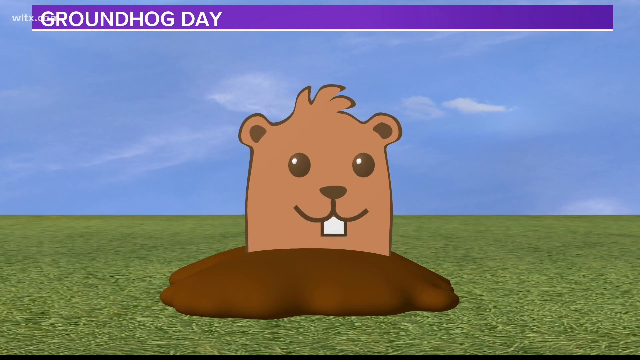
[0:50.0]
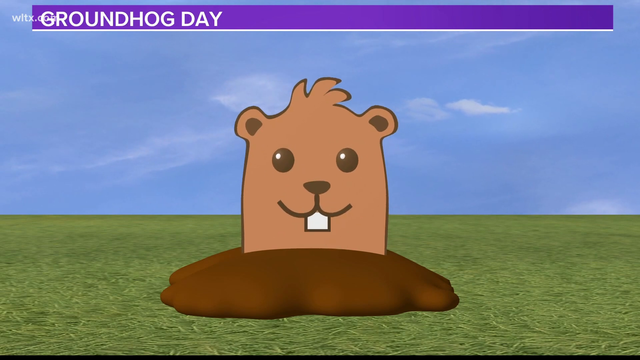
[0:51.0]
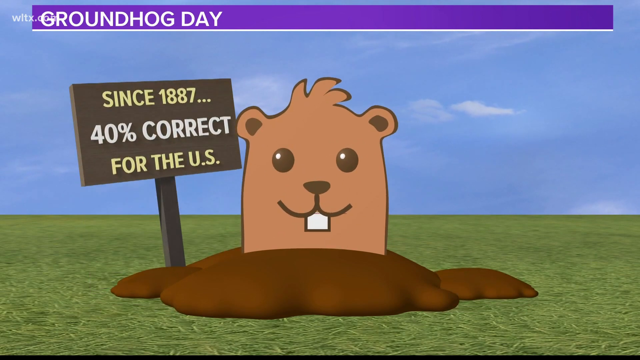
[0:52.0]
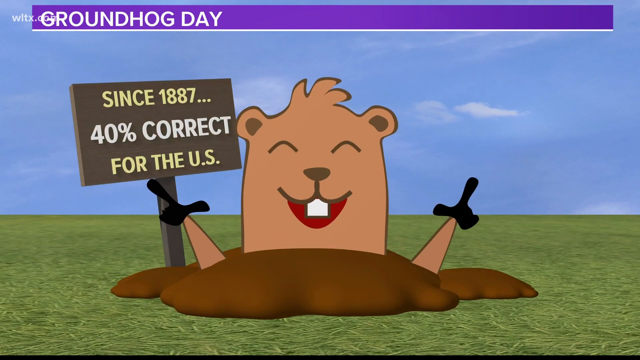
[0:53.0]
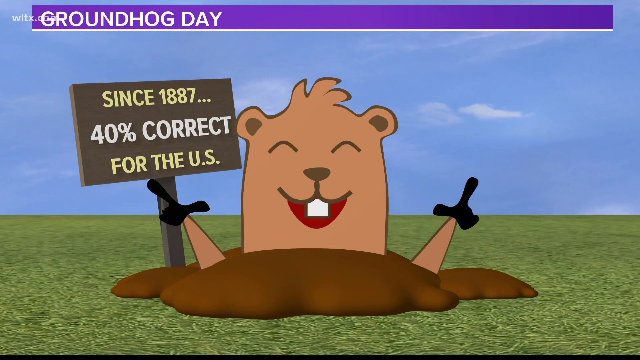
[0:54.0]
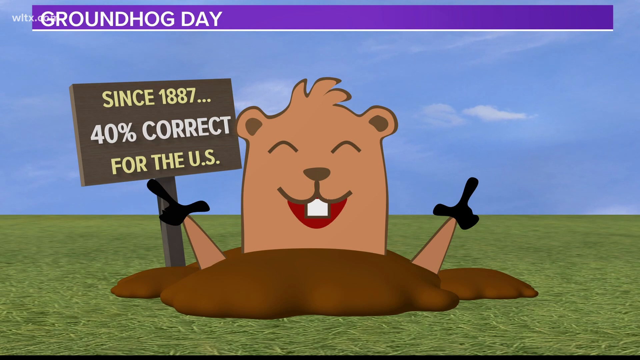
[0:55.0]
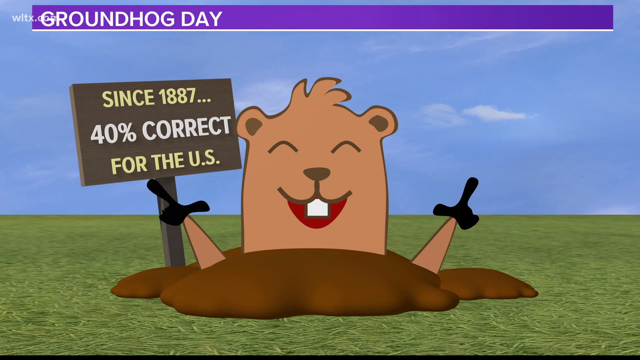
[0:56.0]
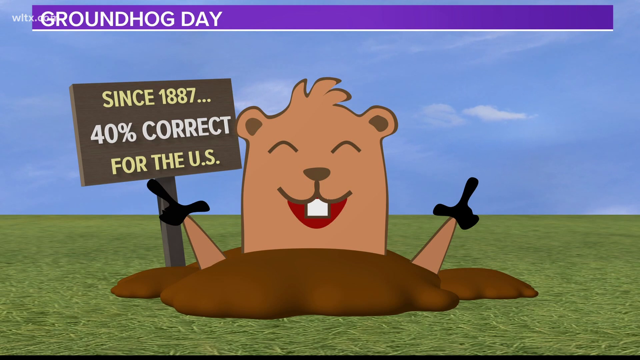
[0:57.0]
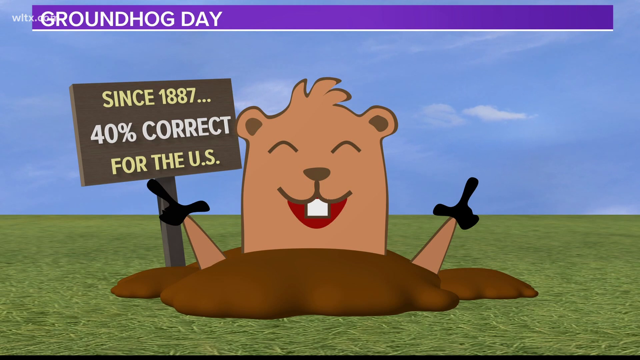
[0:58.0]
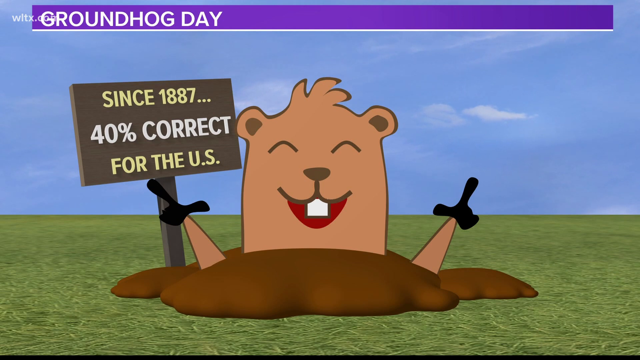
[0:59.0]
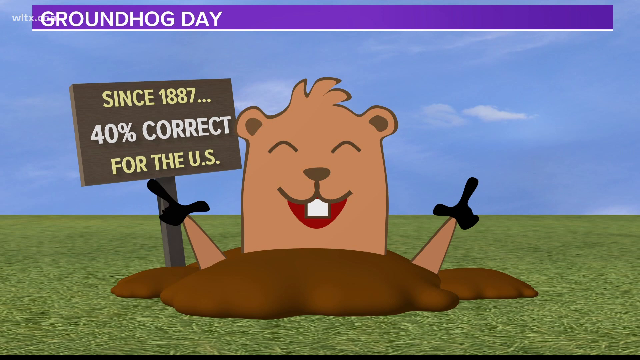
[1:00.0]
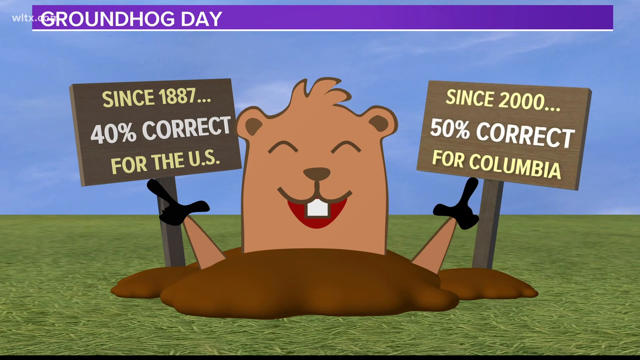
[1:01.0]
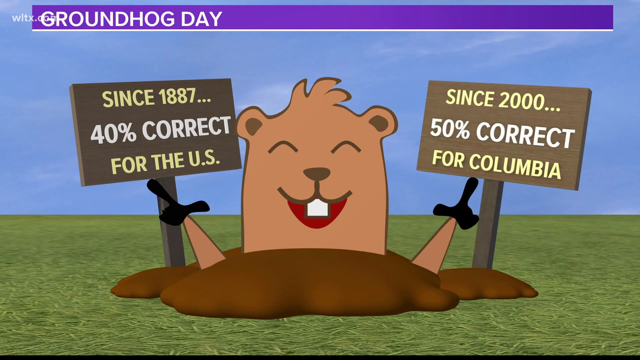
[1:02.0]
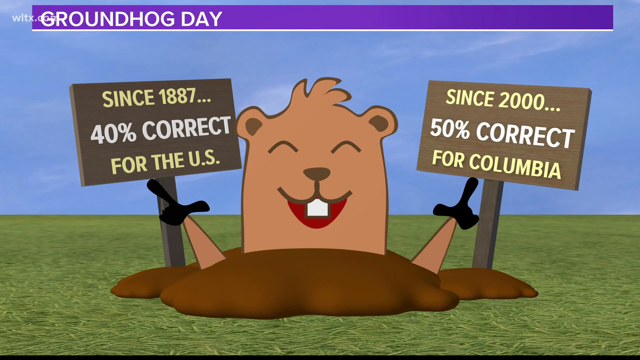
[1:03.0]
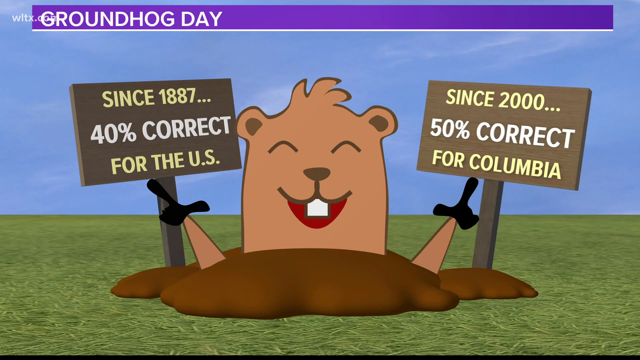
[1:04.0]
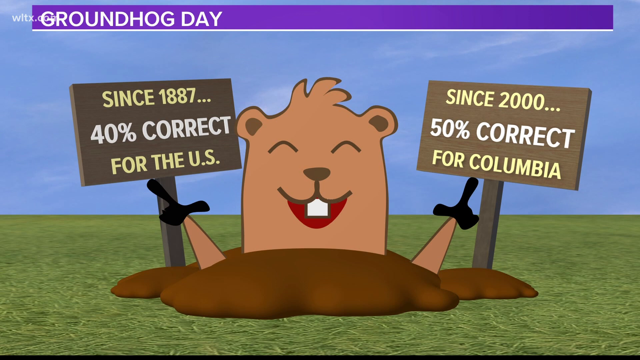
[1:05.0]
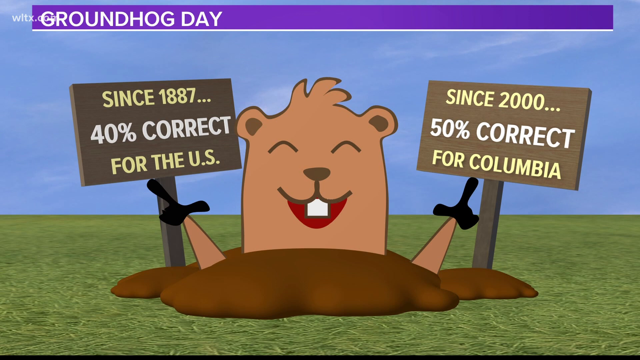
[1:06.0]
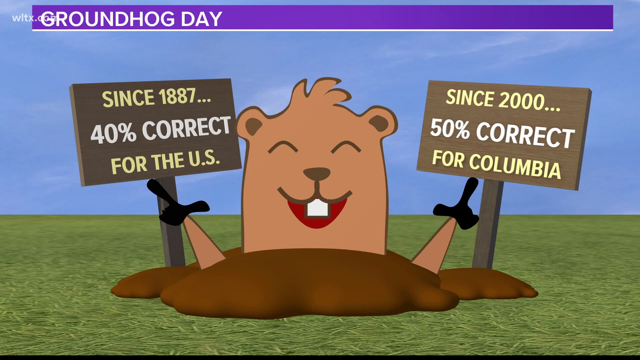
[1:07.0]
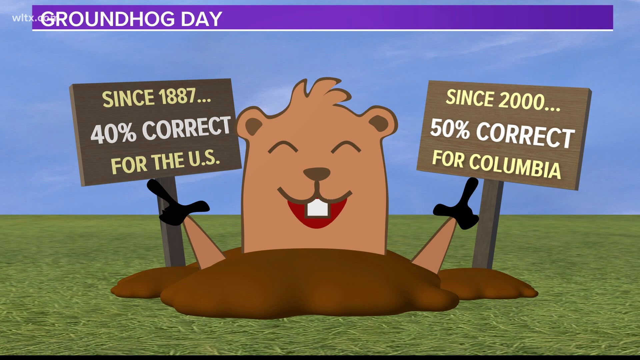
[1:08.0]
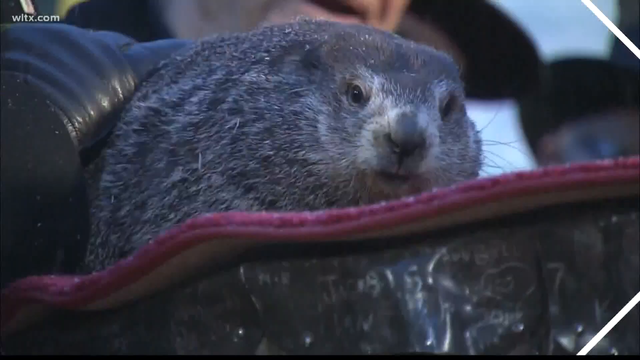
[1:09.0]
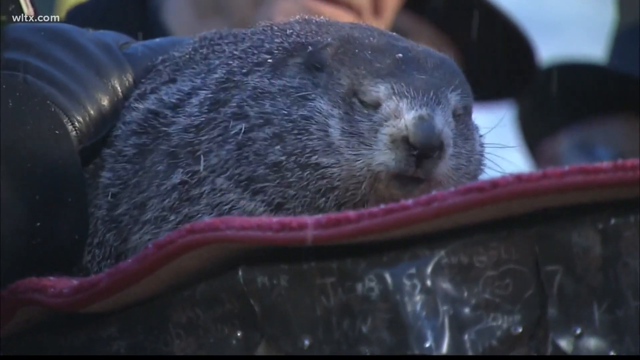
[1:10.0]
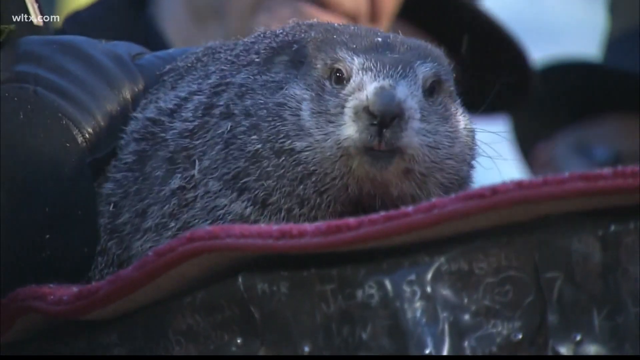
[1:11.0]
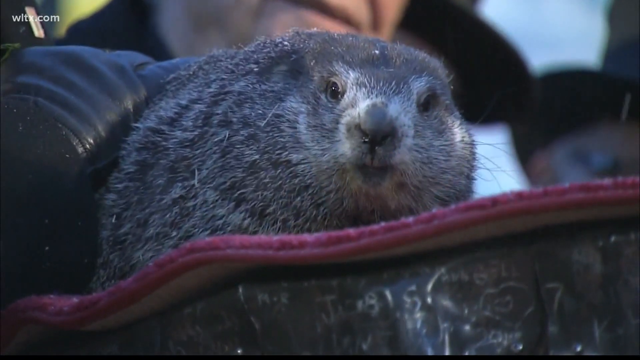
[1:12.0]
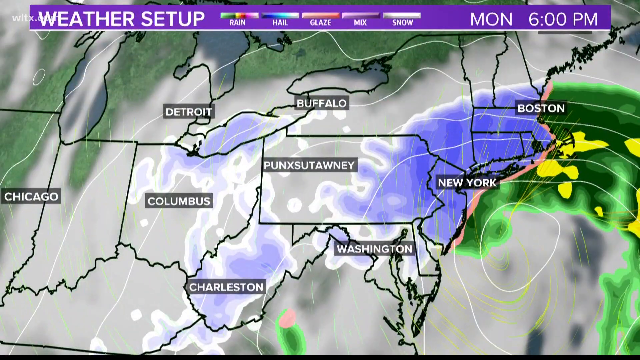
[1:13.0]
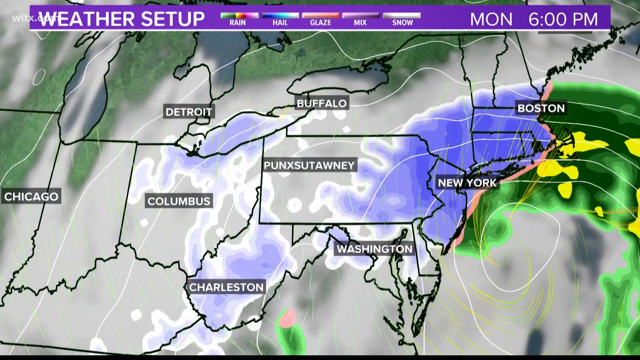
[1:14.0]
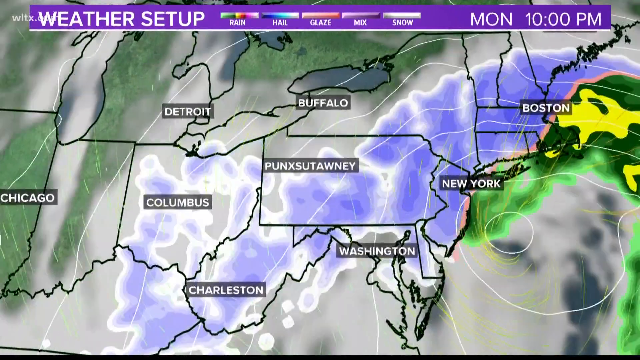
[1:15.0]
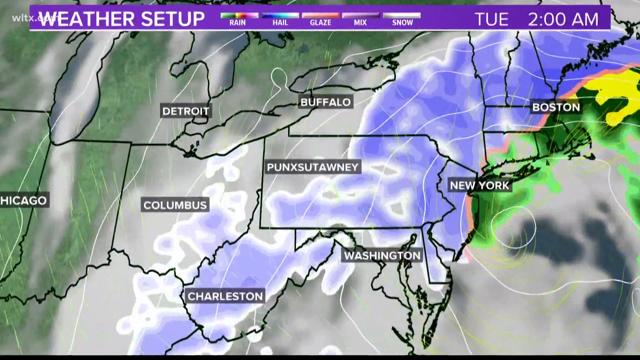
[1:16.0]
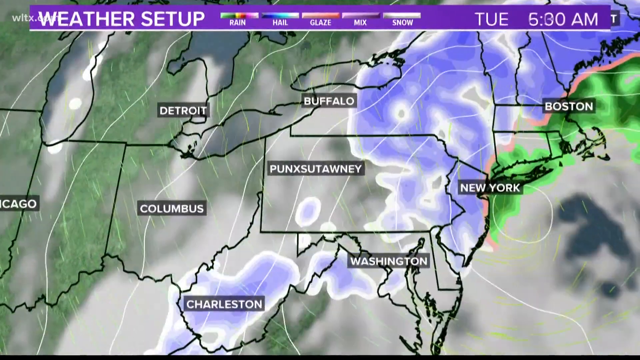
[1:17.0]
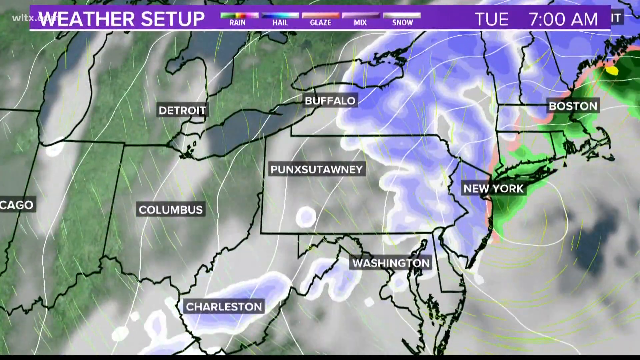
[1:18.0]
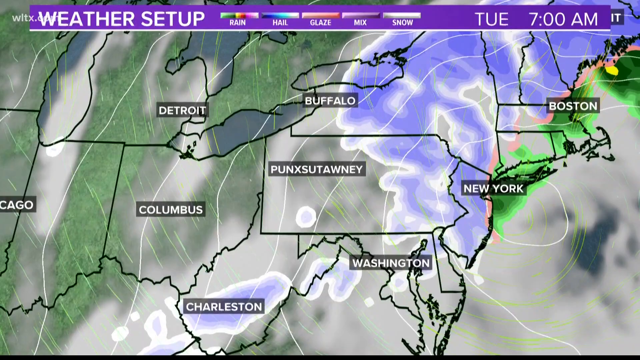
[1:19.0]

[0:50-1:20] An animated groundhog comes out of the ground and pulls the sun out of the ground, smiling with his hands in the air. Text reads "since 1887, 40% correct for the U.S." Then another sign appears reading "since 2000, 50% correct for Columbia." Live footage of the groundhog follows; he looks like he is kind of sniffing the air and shaking a little. Next comes a weather map with a legend showing rain, hail, glaze, mix and snow. The map shows the east coast, with Detroit, Buffalo, Punxsutawney, Columbus, Charlotte, Washington, New York and Boston labeled. It appears to be for Monday at 6 p.m., and the map seems to focus on Punxsutawney.